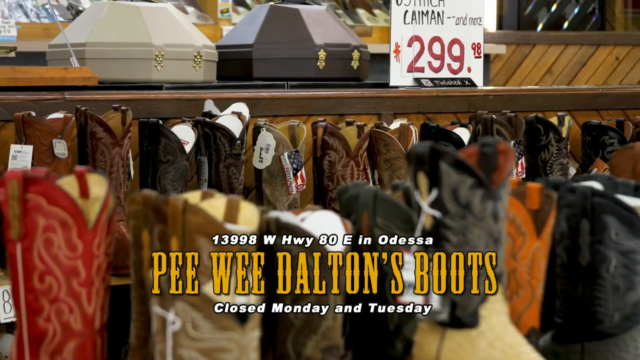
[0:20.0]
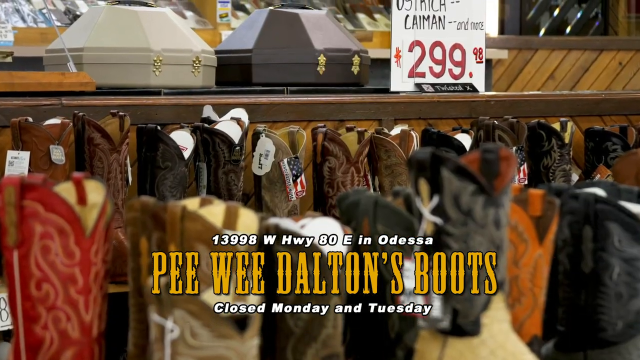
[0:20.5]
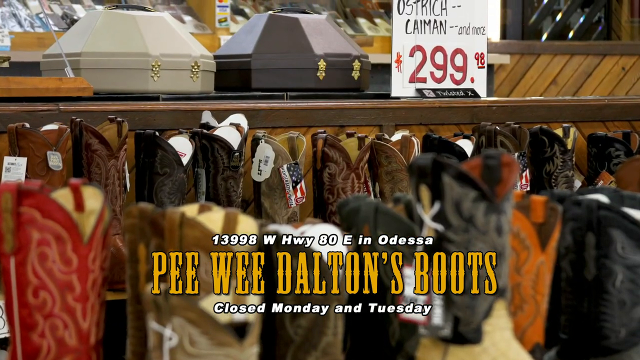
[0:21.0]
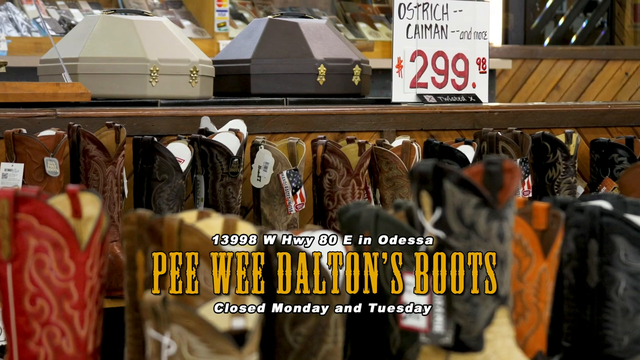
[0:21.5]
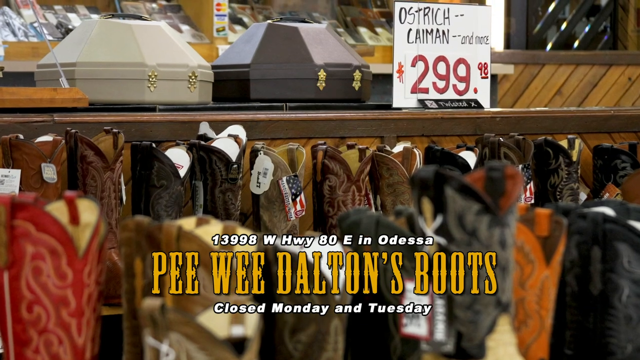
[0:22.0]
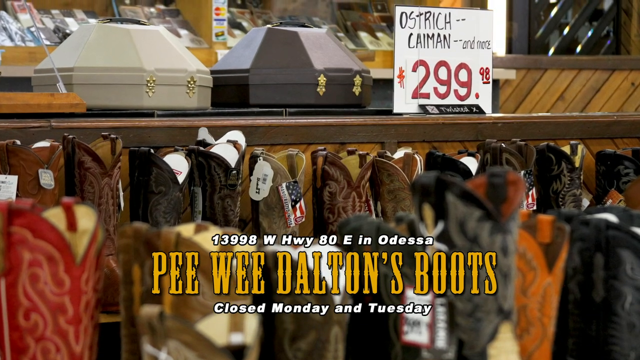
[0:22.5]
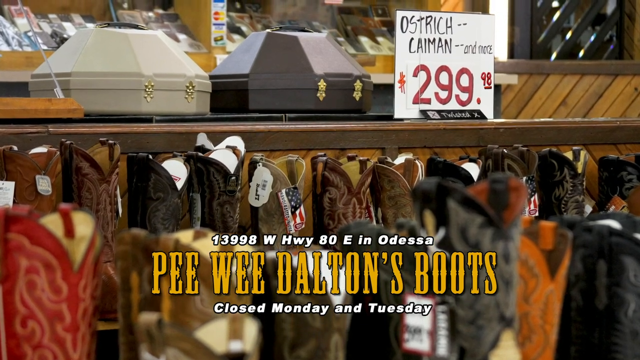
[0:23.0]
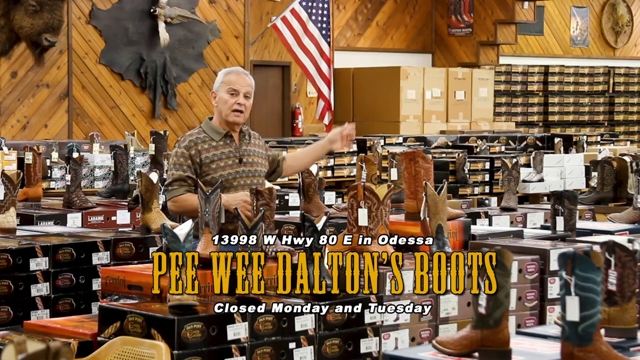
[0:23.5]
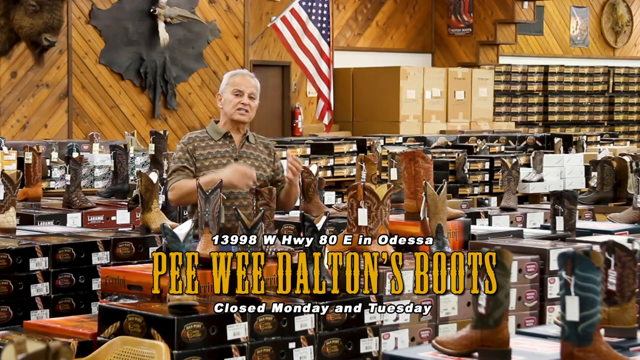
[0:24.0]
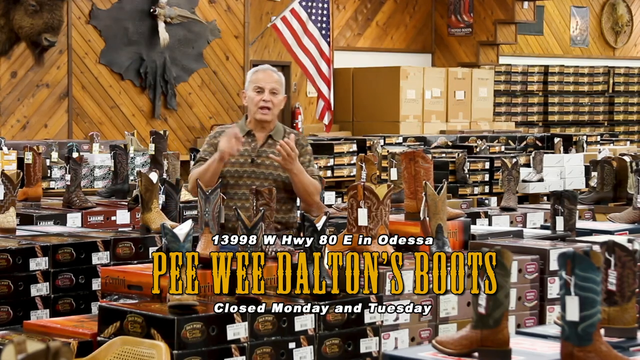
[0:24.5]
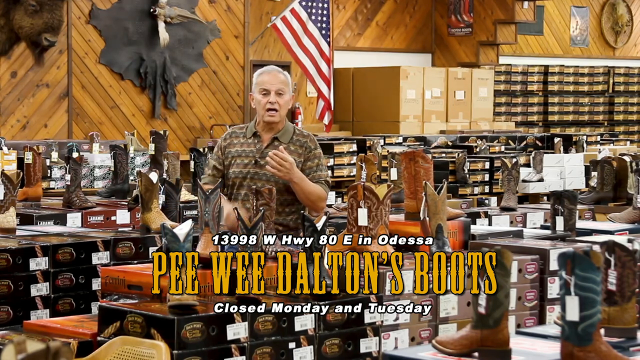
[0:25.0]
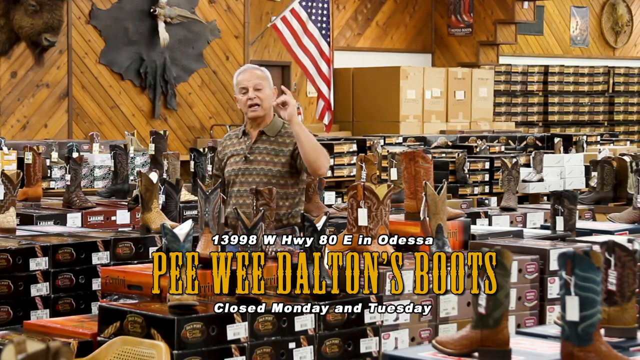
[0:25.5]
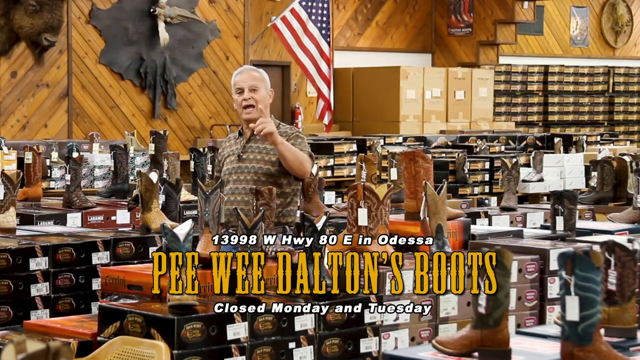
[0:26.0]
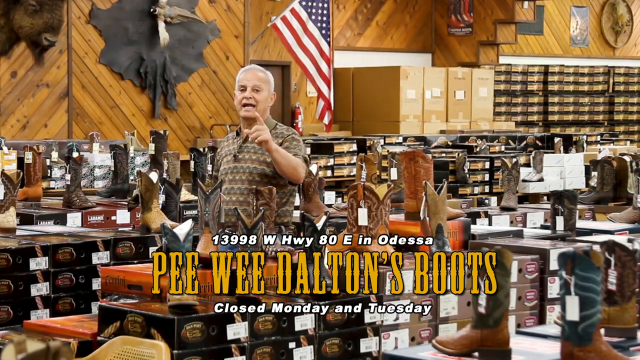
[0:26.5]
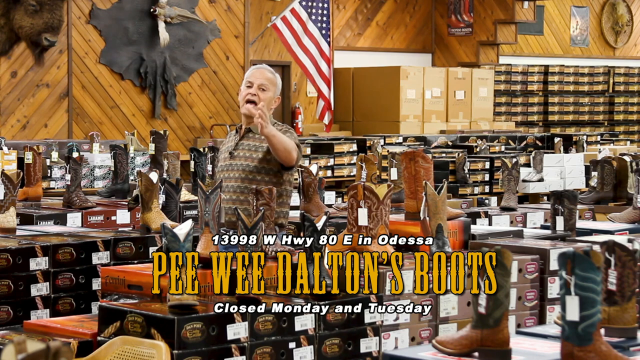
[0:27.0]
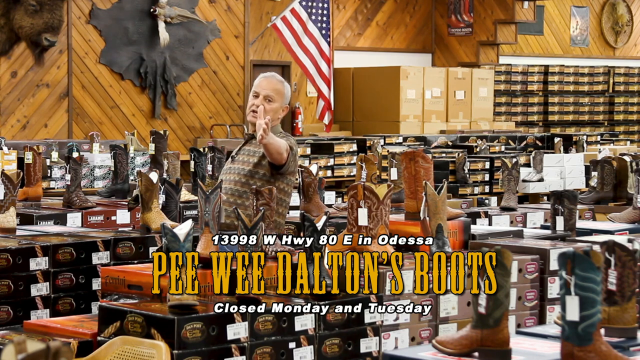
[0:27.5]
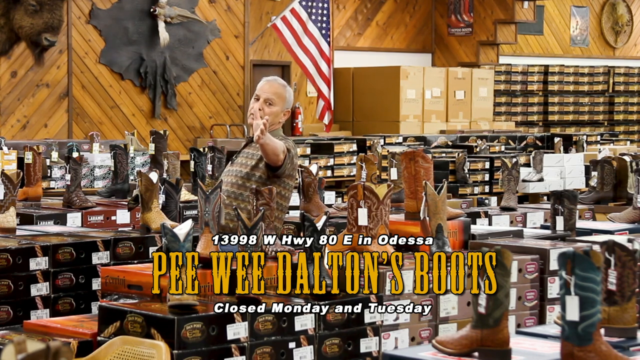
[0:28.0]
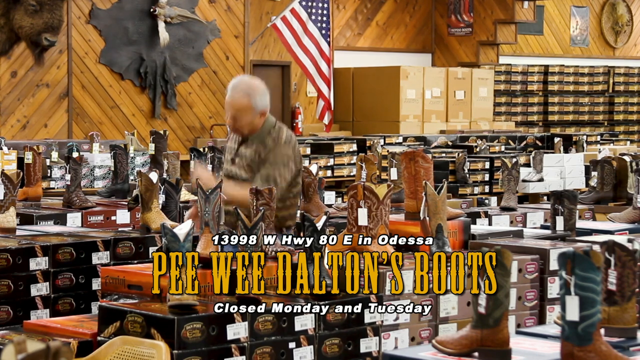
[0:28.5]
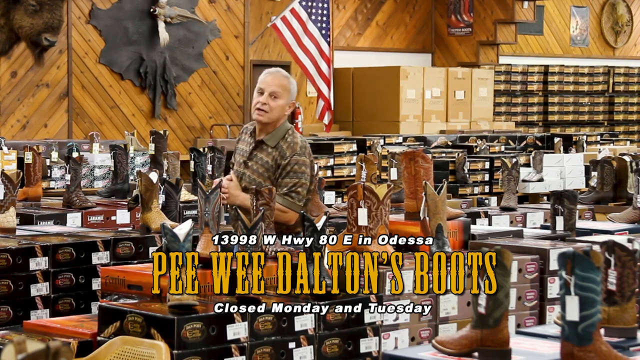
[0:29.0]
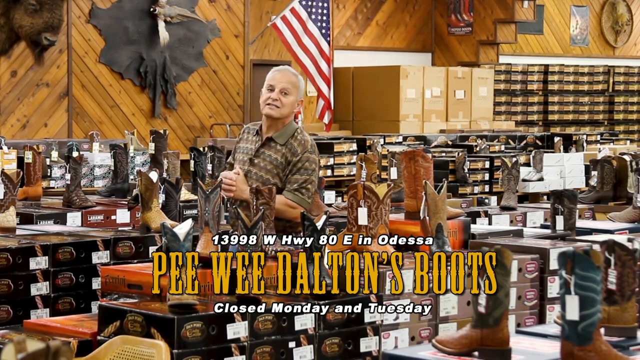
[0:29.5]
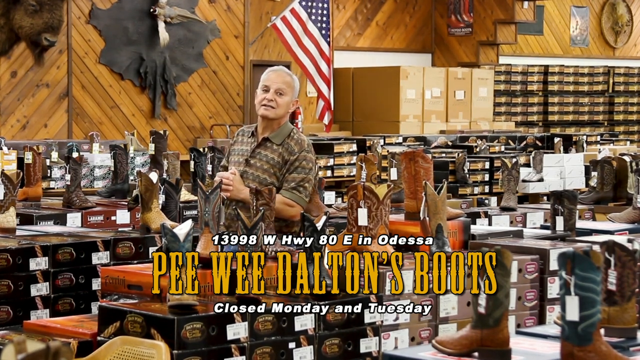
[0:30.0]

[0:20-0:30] A display shows different cowboy boots in red, brown, orange, and black and gray. The gentleman speaks about the boots again, with an American flag in the background. On-screen text reads "13998 West Highway 80E in Odessa, Pee Wee Dalton's Boots" and indicates they are closed Monday and Tuesday. A wide variety of boots is on display, along with a mannequin of sorts sitting in a chair wearing a cowboy hat, a red bandana around its neck, blue jeans and cowboy boots. Boot displays fill the left-hand and right-hand sides; everywhere the view turns there are cowboy boots. The gentleman in the brown polo shirt points at some of the boots, showing the variety the store carries.